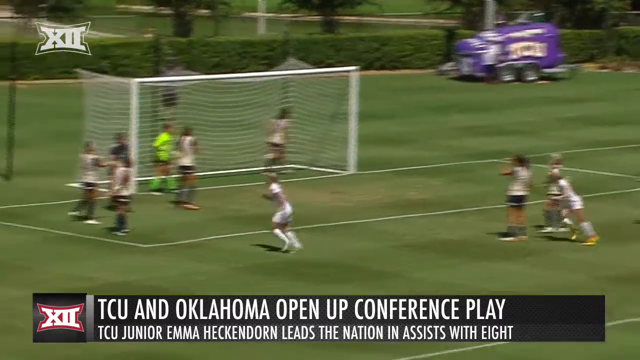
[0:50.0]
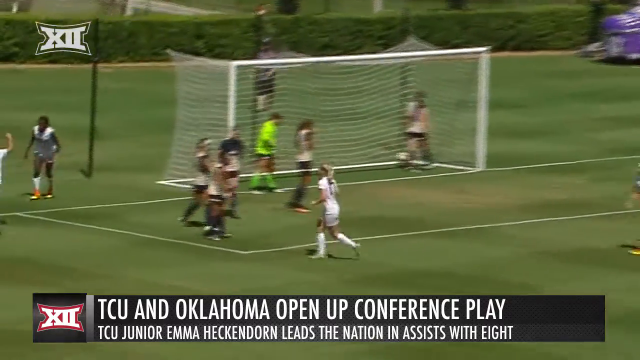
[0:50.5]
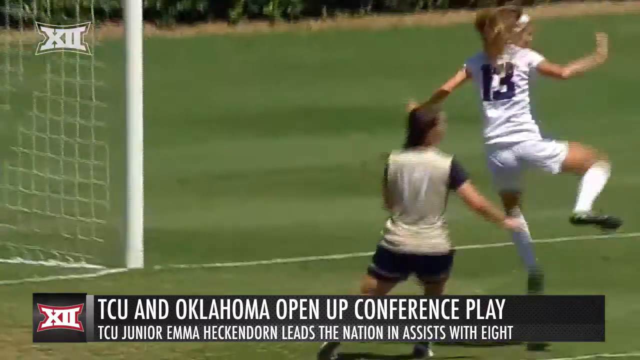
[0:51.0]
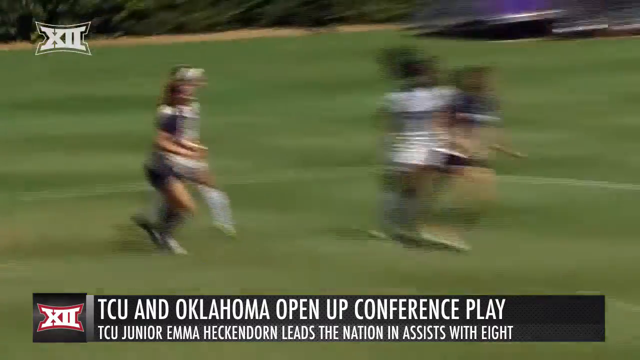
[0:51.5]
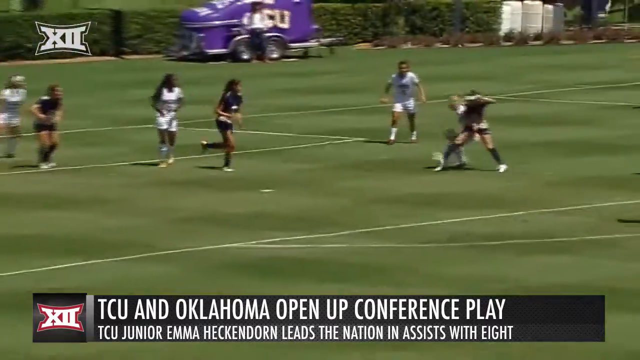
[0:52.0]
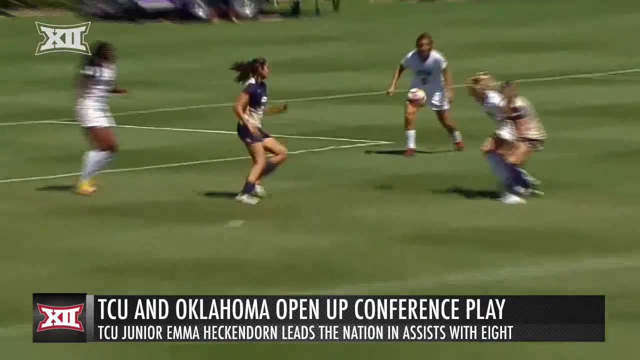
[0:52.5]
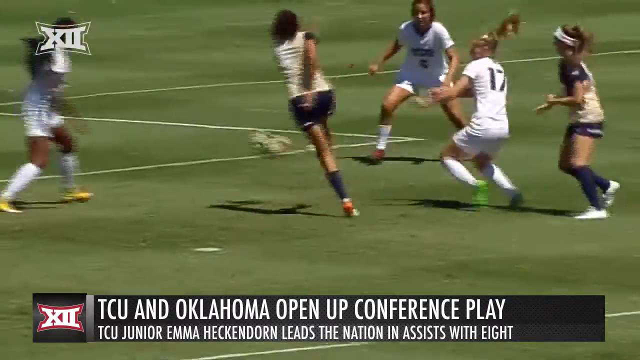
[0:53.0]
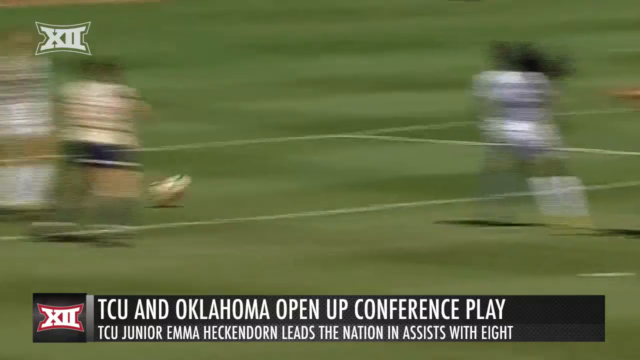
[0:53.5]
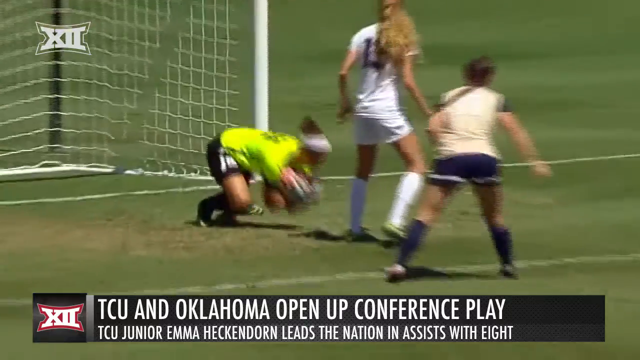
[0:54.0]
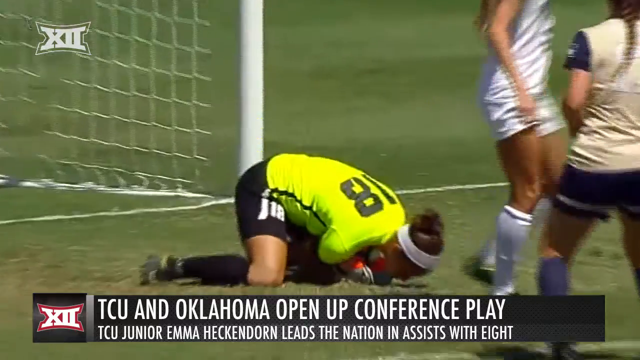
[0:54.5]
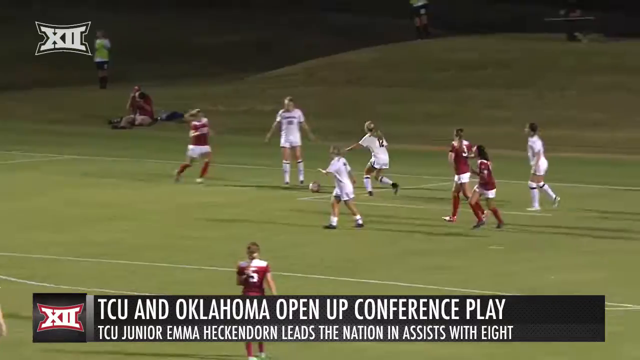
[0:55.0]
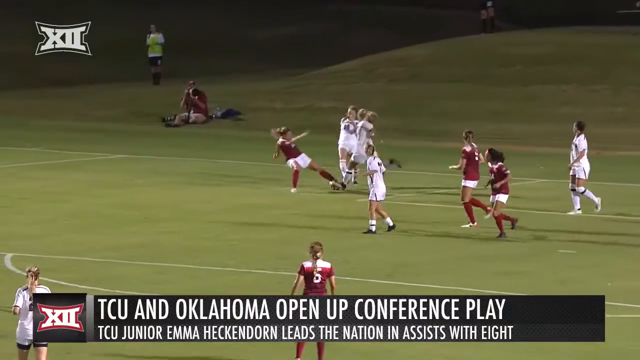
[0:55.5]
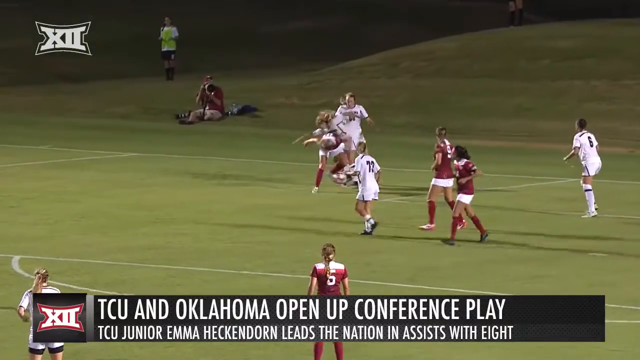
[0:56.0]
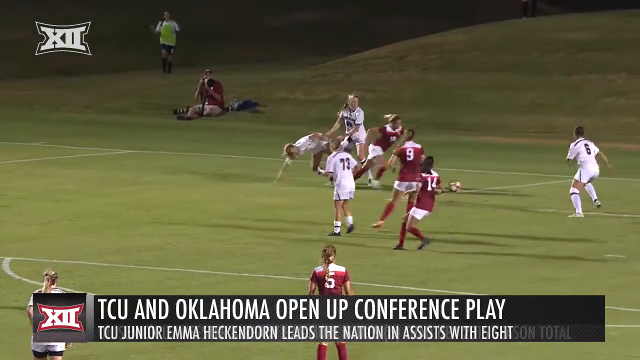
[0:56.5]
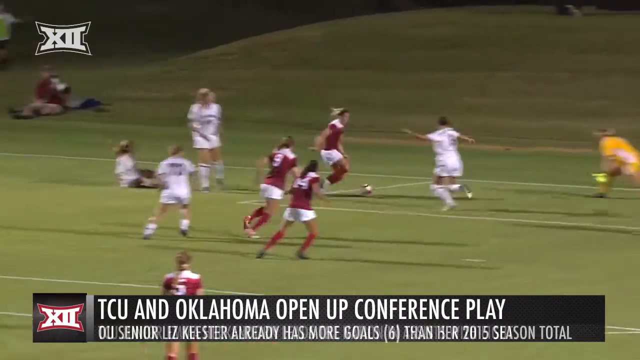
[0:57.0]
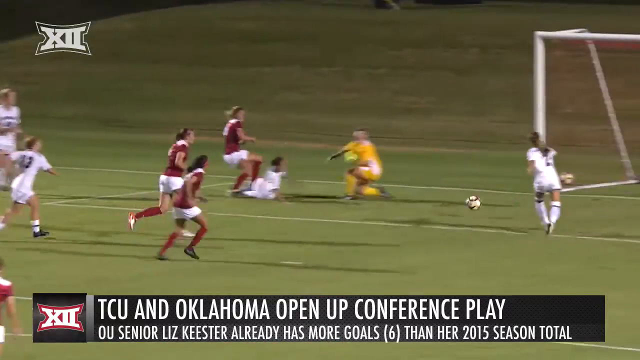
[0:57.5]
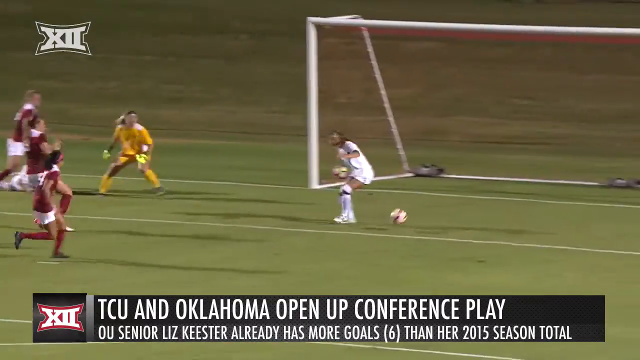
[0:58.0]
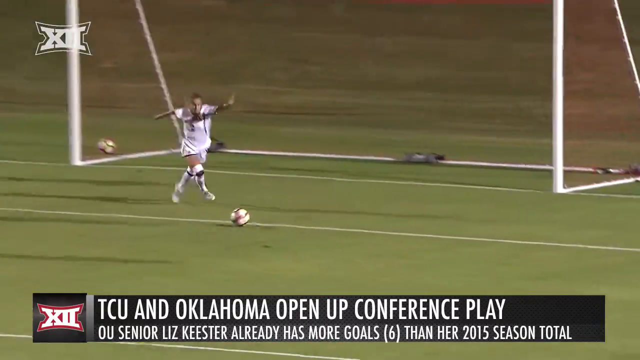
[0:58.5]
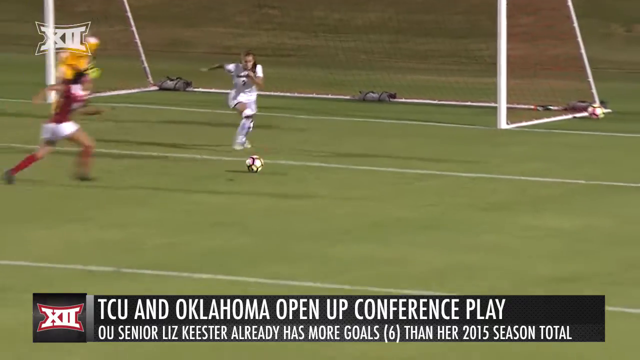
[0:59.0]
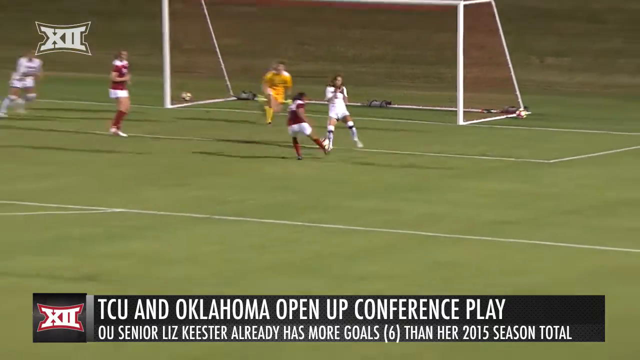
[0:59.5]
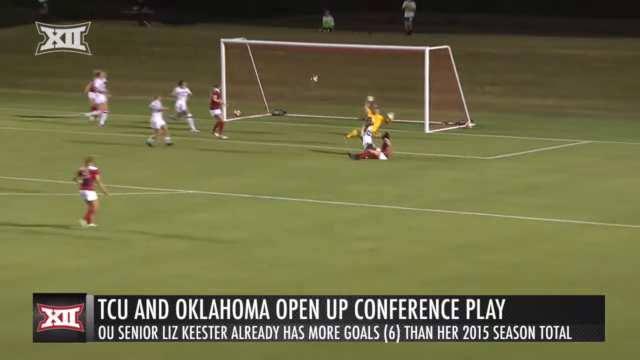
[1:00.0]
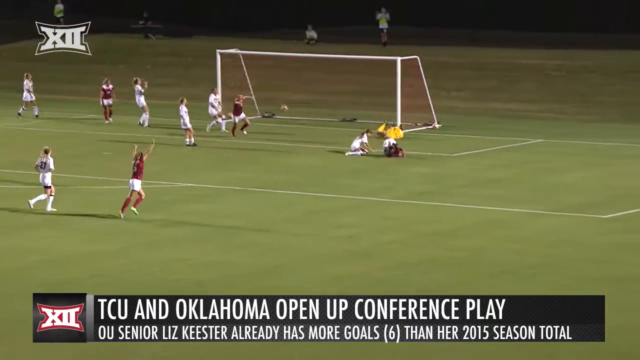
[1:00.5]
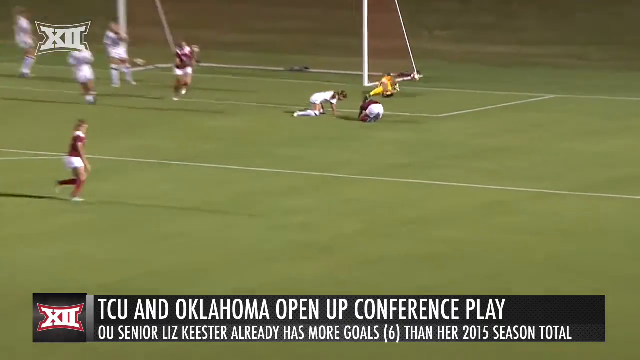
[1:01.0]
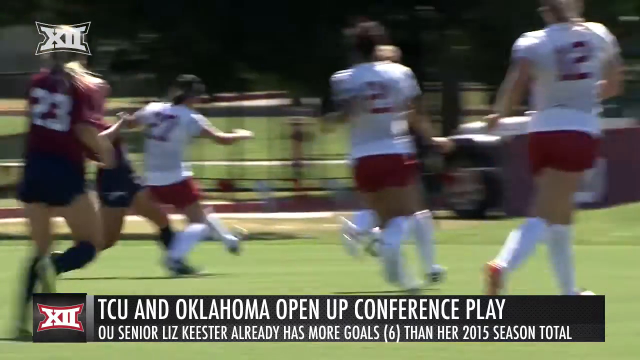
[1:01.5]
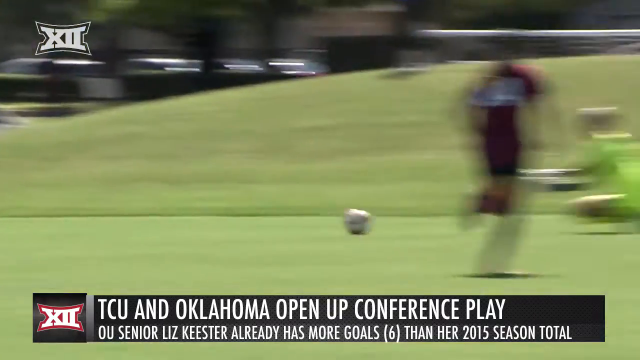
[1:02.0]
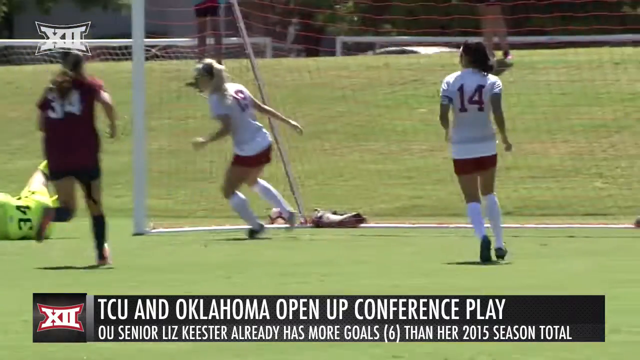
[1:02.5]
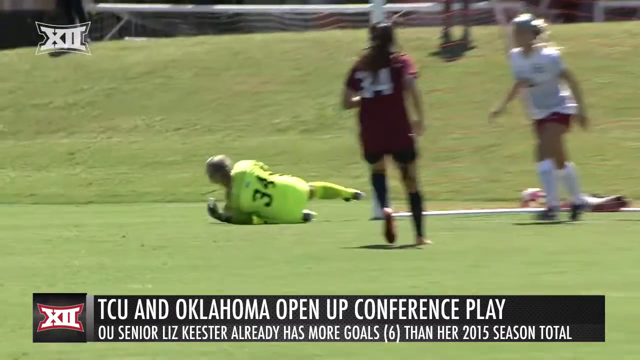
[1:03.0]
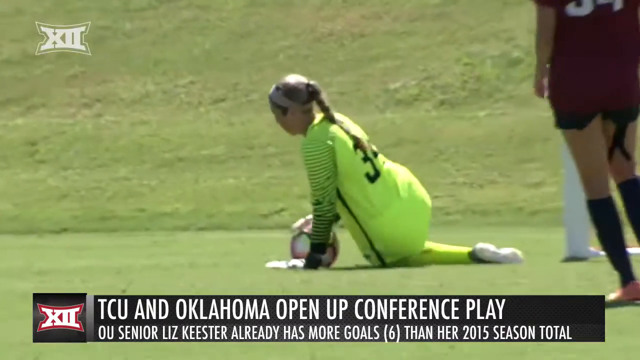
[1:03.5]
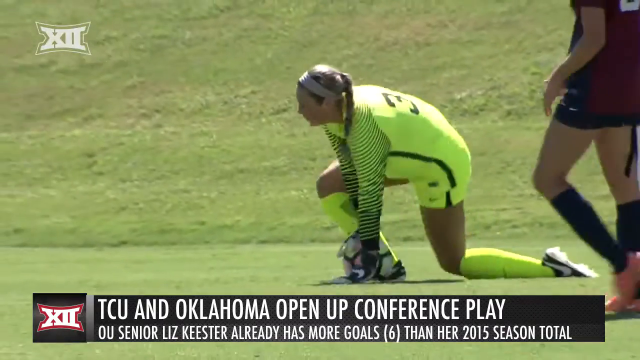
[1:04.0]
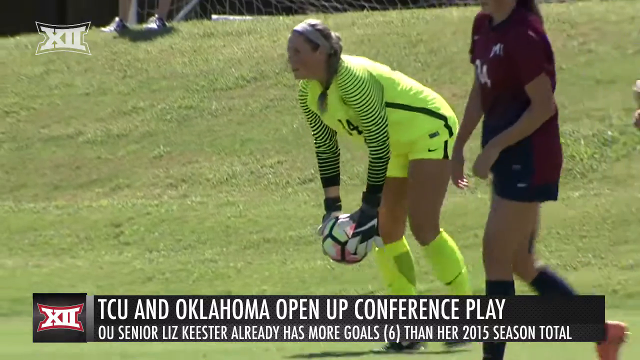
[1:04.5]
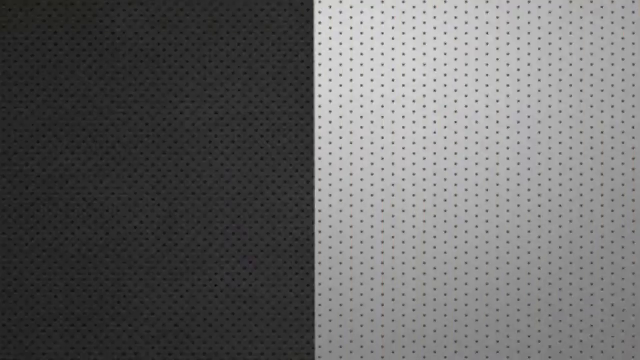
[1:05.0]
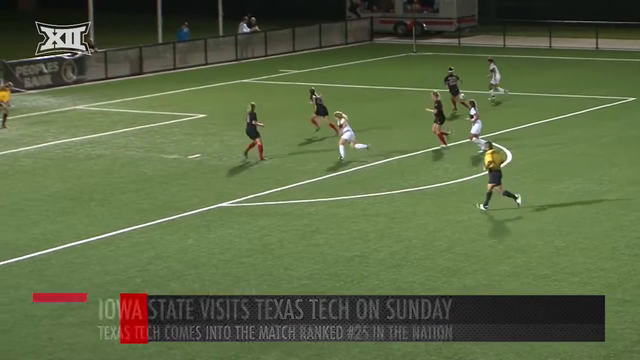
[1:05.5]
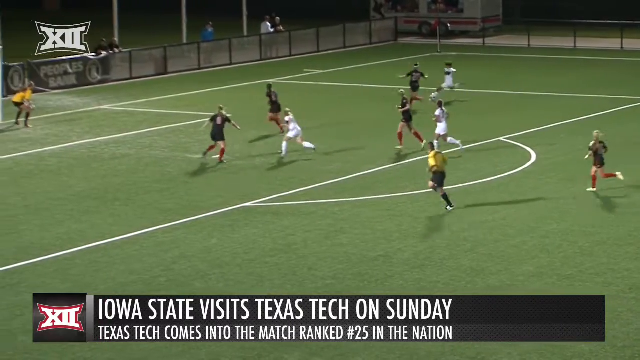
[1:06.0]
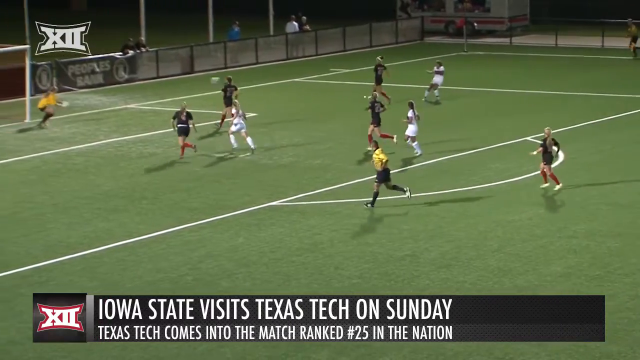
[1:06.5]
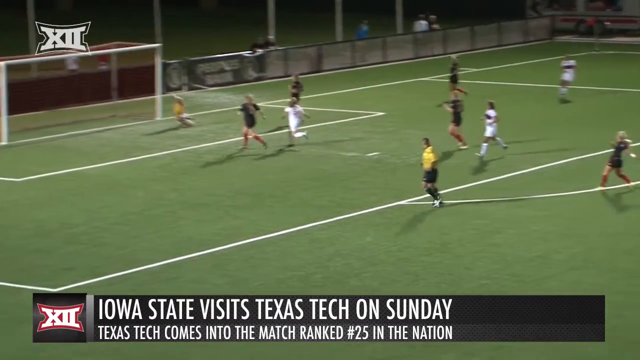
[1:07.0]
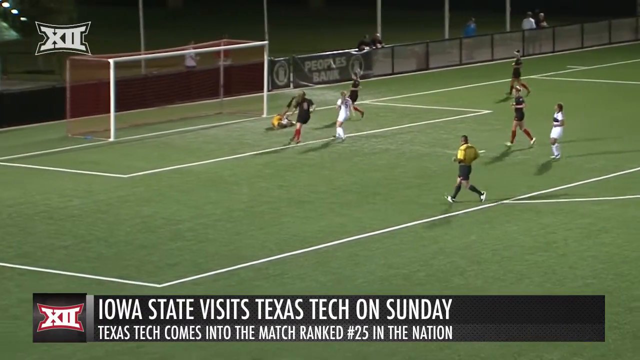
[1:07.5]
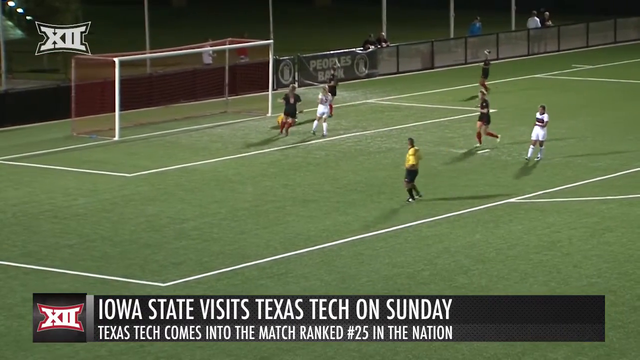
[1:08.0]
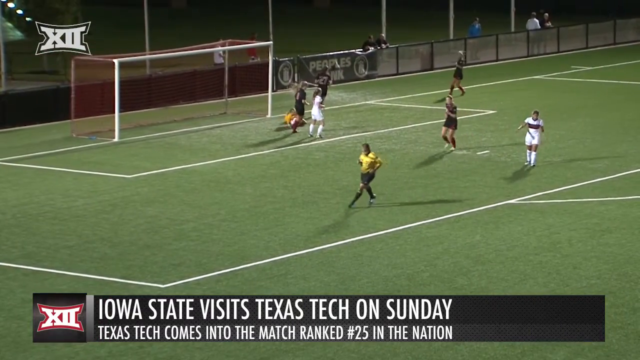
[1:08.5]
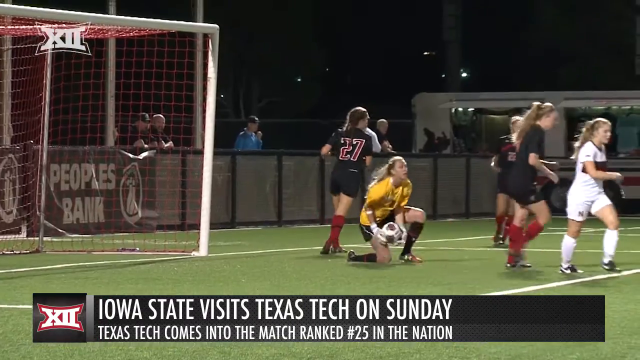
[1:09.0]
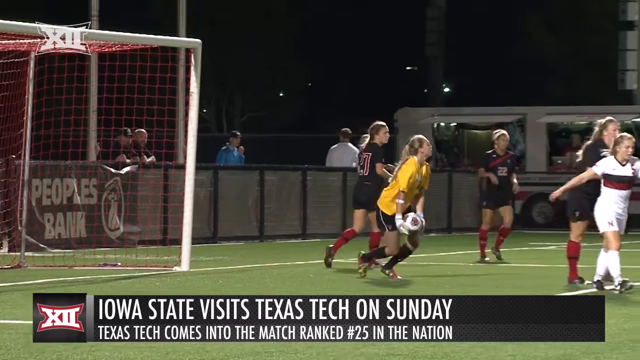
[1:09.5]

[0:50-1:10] Text reads "TCU and Oklahoma open up conference play", followed by text saying that TCU junior Emma, surname spelled H-E-C-E-N-D-O-R-N, leads the nation in assists. Women's college soccer players are shown playing. In one shot a goalie bends around to catch the ball, and in another a goalie wears number 34. Text then appears to read "Iowa State versus Texas Tech on Sunday", and another line says "Texas Tech comes into the match ranked #25".